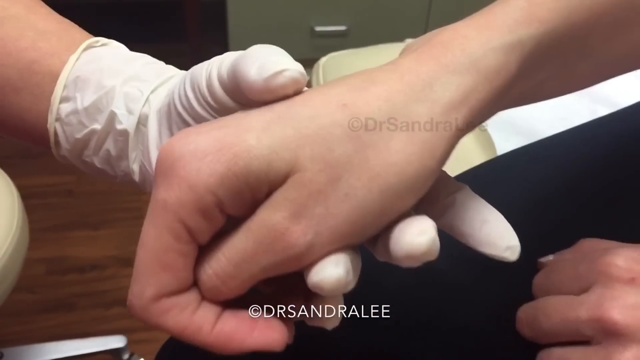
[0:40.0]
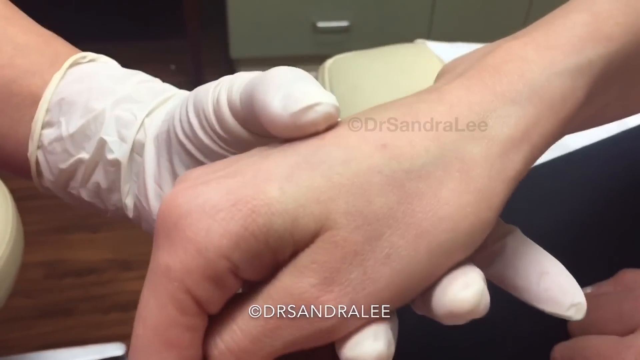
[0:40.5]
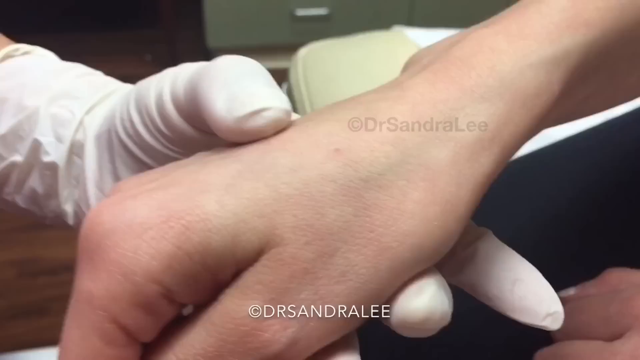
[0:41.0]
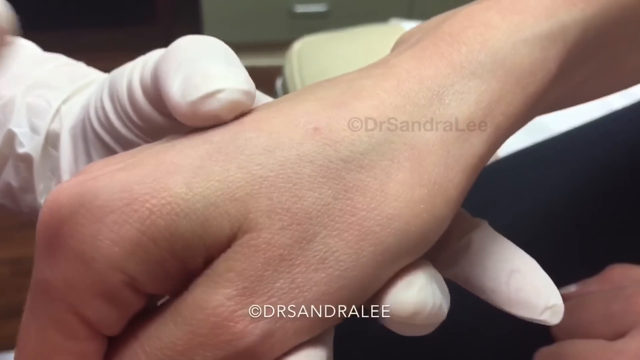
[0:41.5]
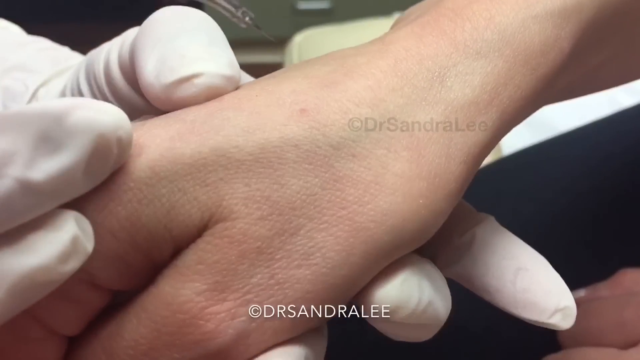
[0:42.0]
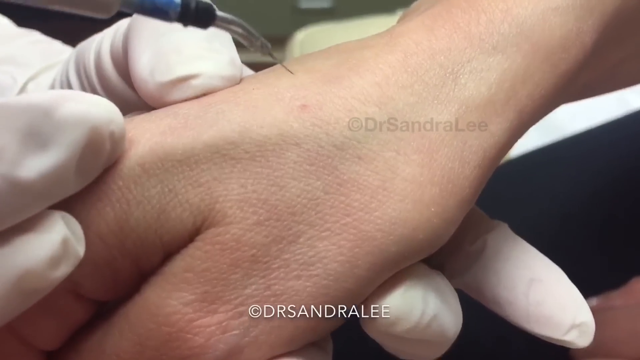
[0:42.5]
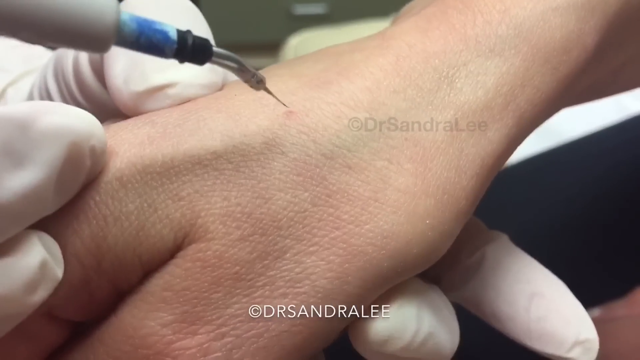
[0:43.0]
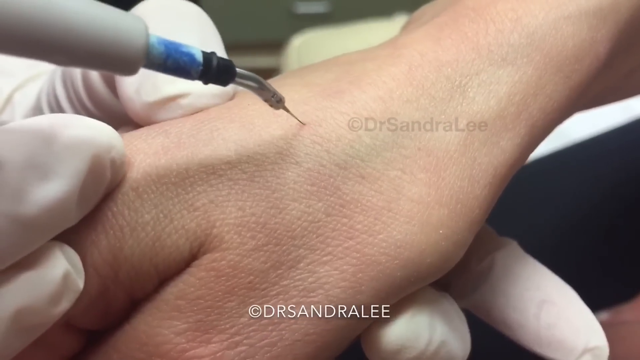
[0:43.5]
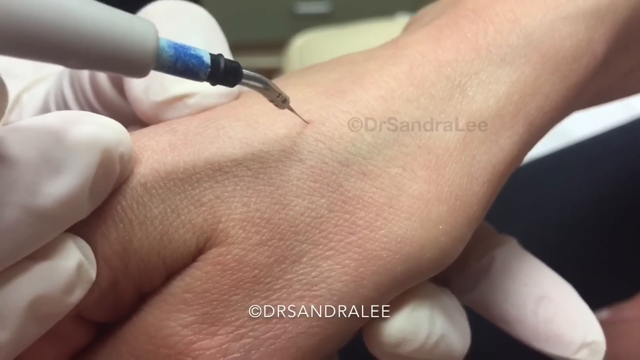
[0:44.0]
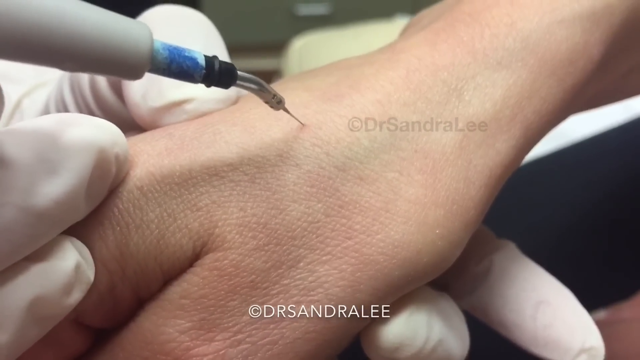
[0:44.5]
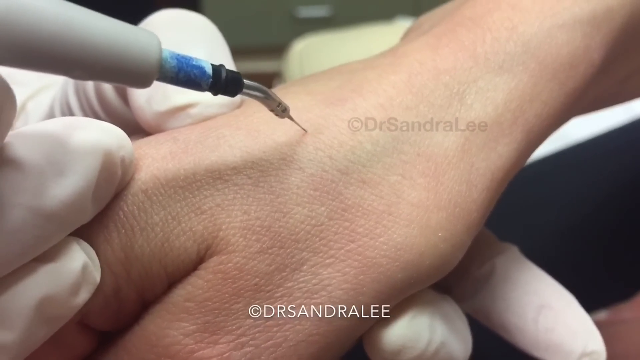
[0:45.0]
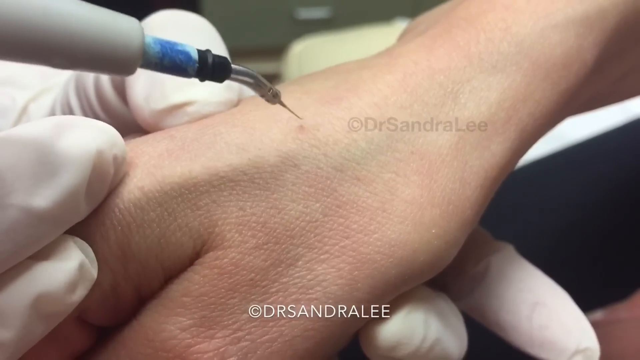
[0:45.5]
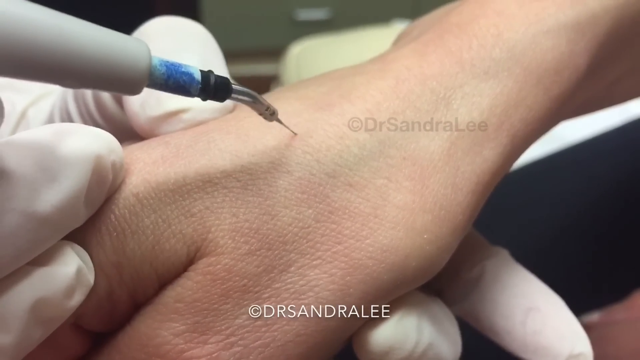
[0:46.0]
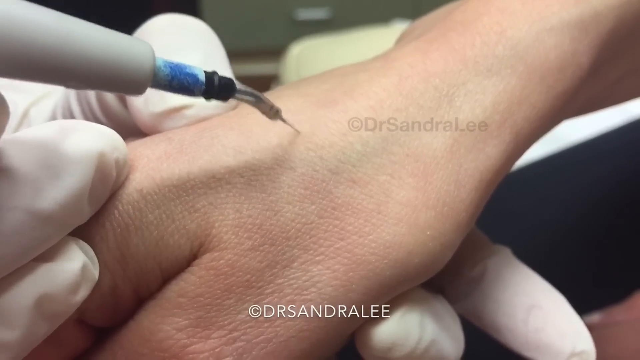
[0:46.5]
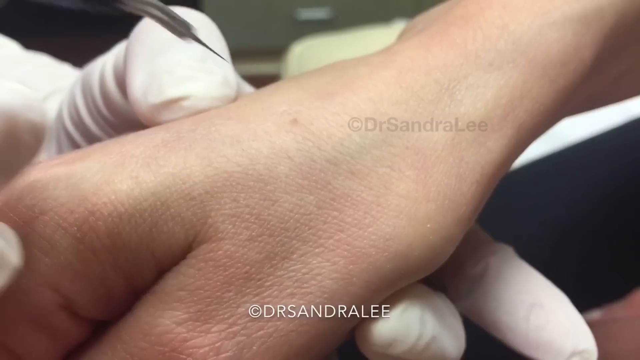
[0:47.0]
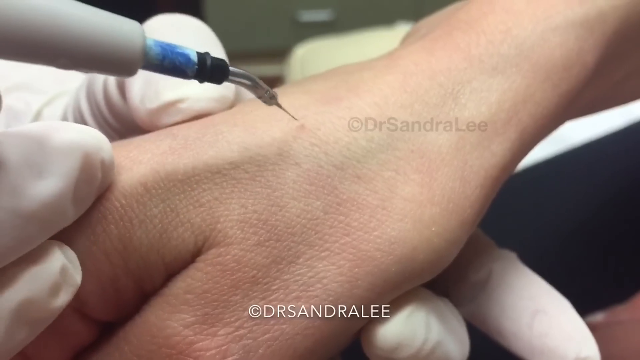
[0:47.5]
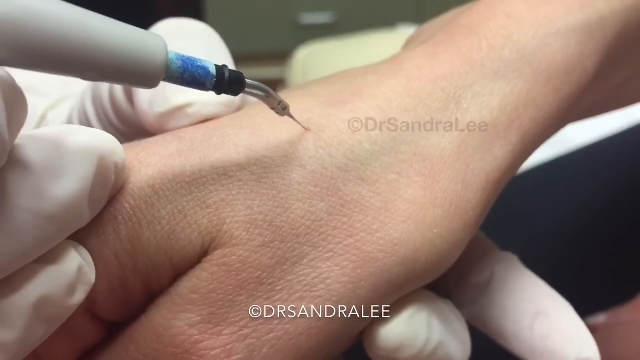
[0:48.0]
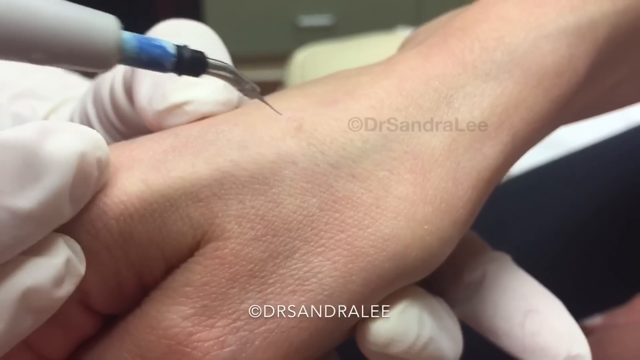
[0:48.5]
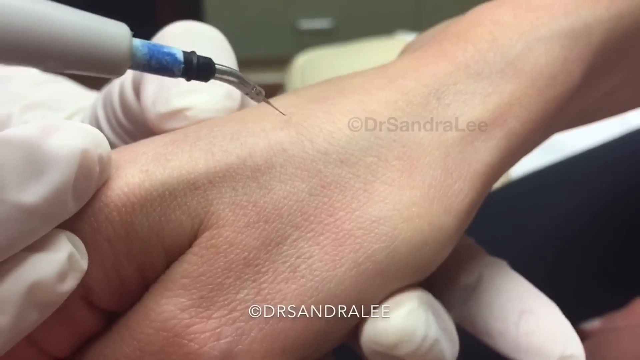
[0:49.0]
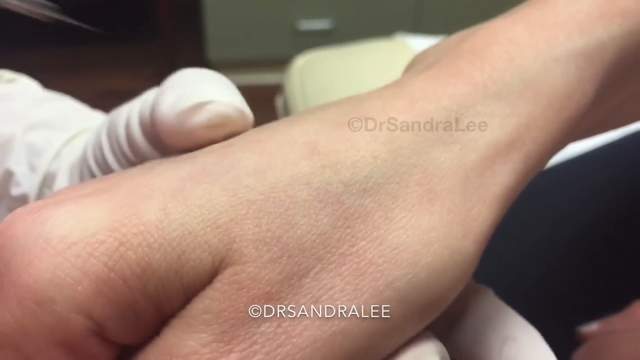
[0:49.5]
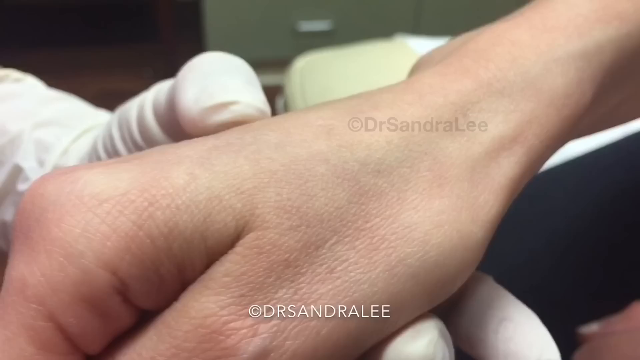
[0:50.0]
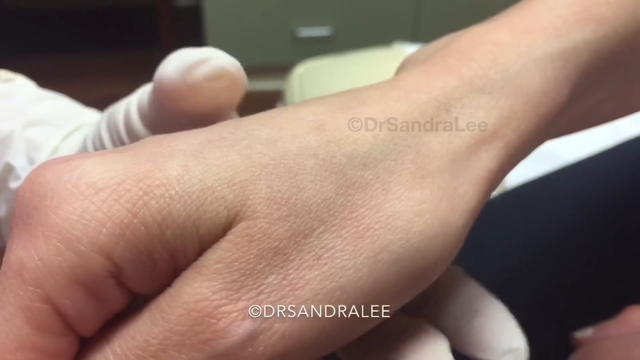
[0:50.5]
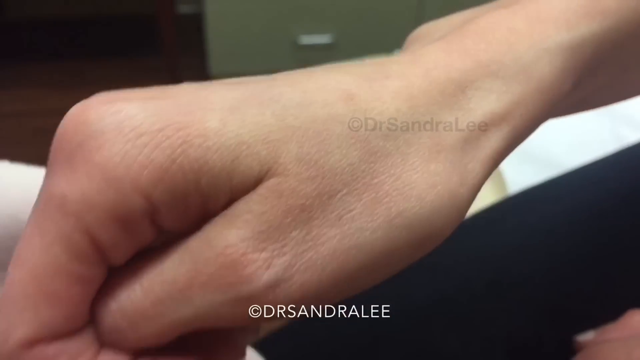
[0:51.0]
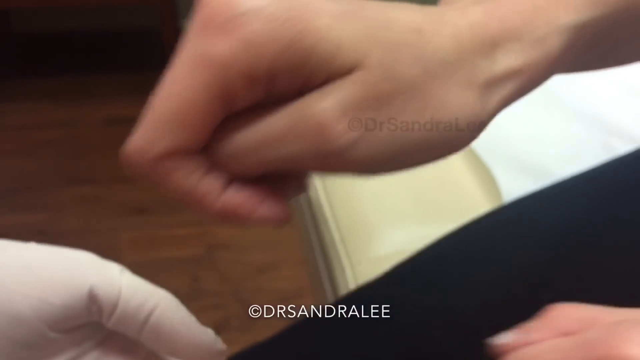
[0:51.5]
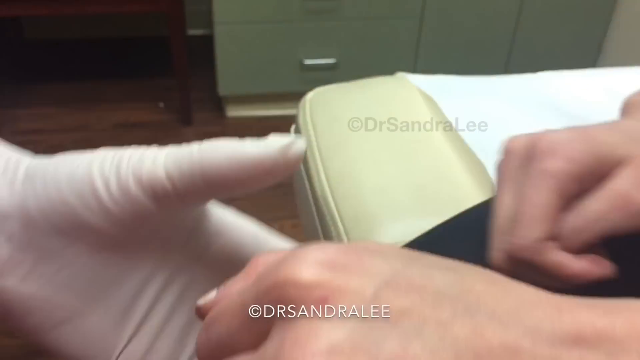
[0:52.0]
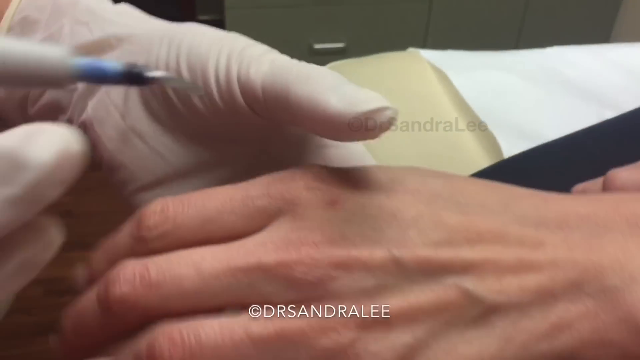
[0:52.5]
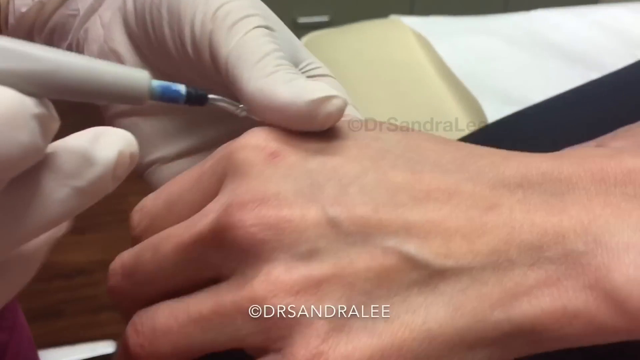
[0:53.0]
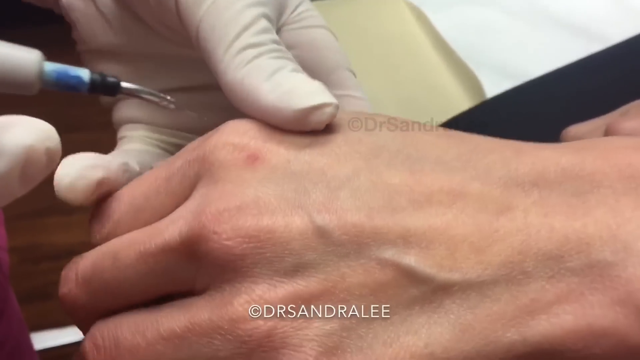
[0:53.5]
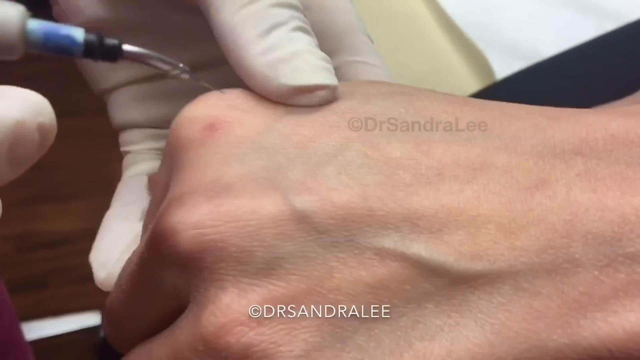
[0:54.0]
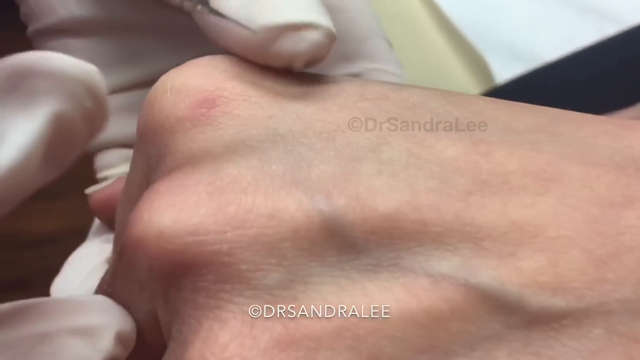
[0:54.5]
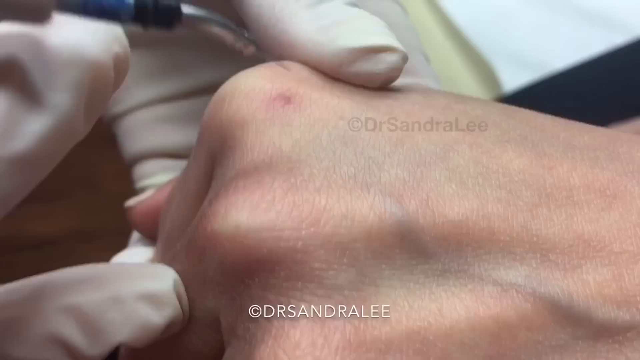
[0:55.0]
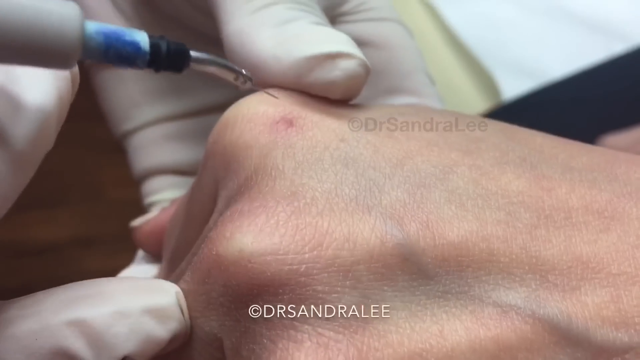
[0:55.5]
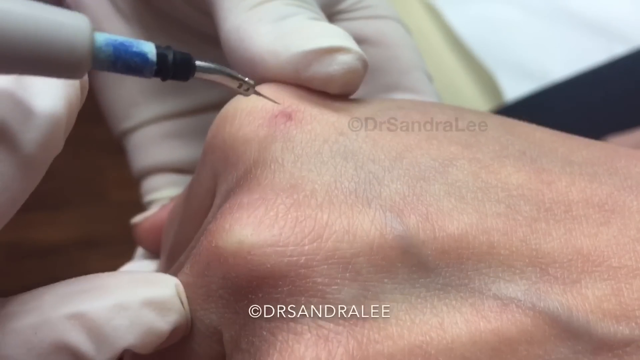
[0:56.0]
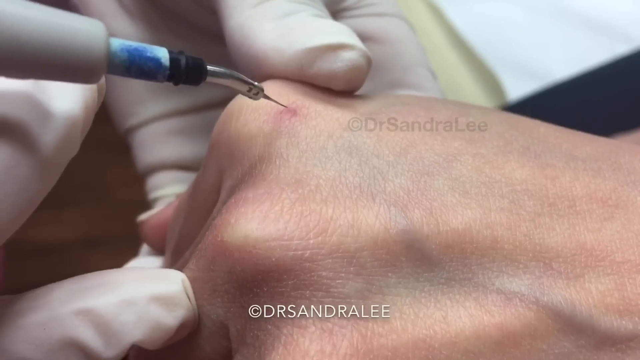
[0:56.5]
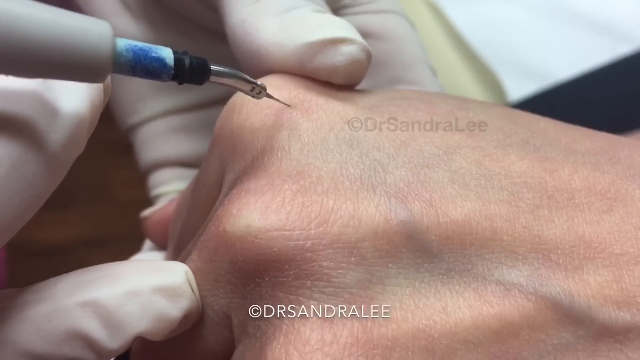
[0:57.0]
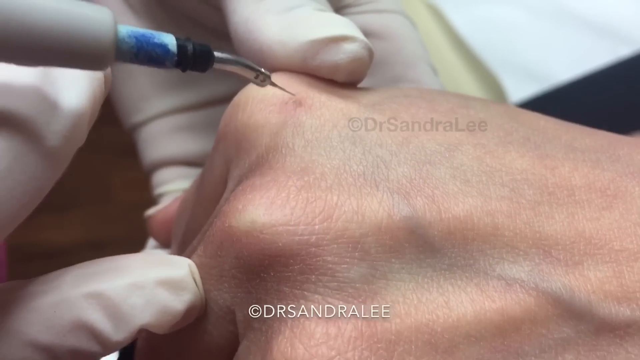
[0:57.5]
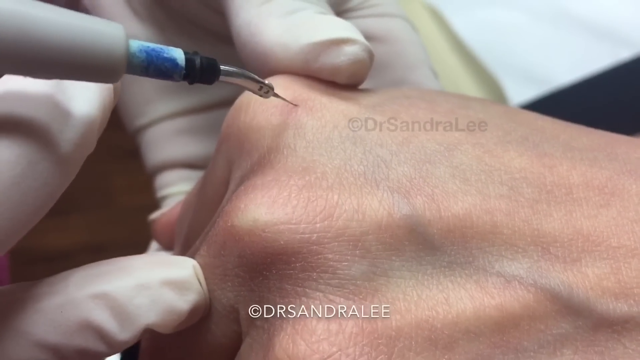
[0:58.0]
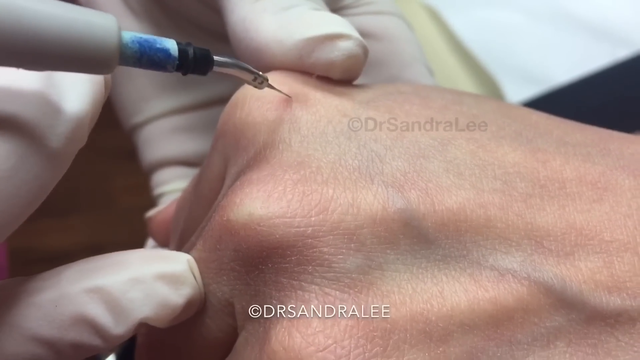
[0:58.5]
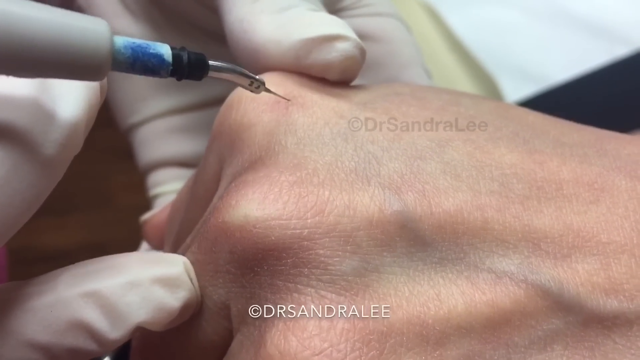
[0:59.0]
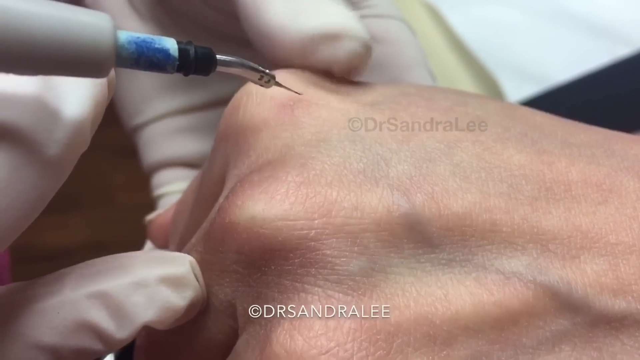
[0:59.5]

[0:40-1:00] The health care worker takes something that looks like a needle contraption and puts it in the middle of a spot, repeatedly kind of touching it to the spot; she does not appear to make a puncture. This is possibly the light used for the treatment. She works on the small spot on his right hand and the bigger spot on his left hand, touching the device to each spot a couple of times and kind of poking into it so that it touches the area. The gloves are white and were apparently white the whole time.